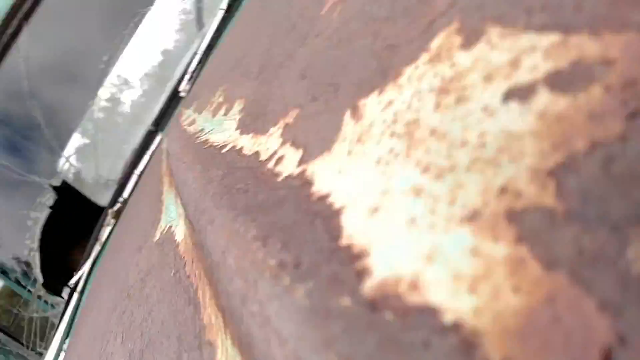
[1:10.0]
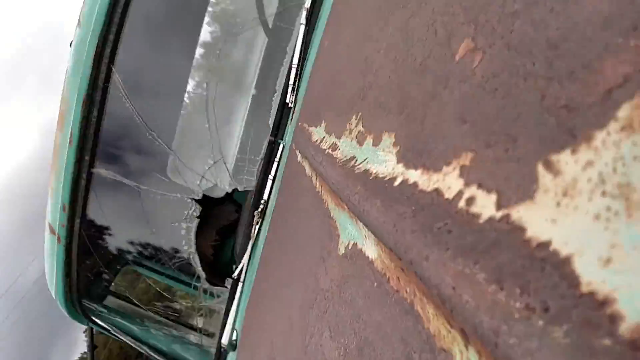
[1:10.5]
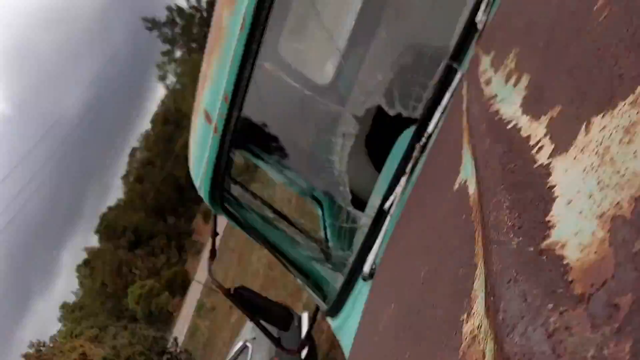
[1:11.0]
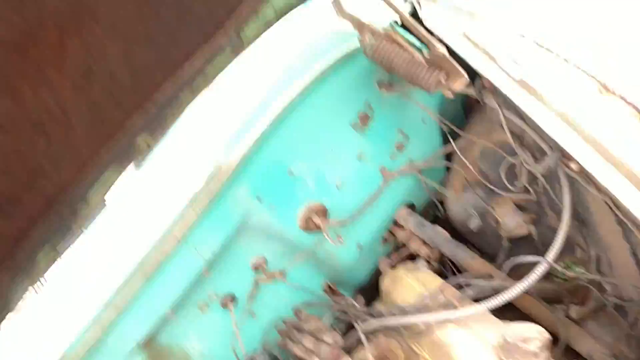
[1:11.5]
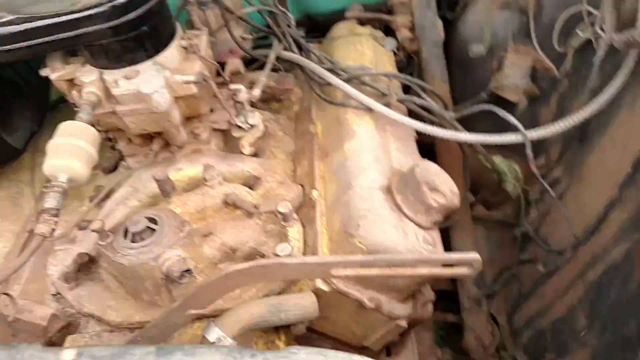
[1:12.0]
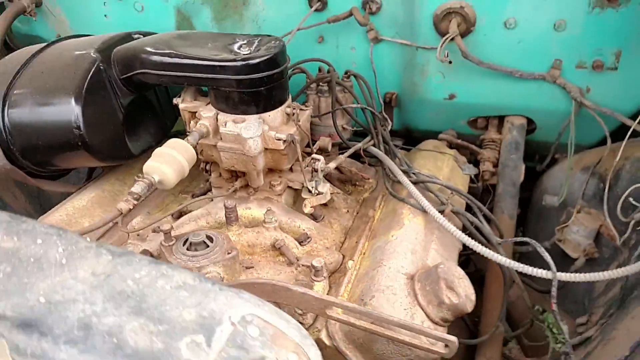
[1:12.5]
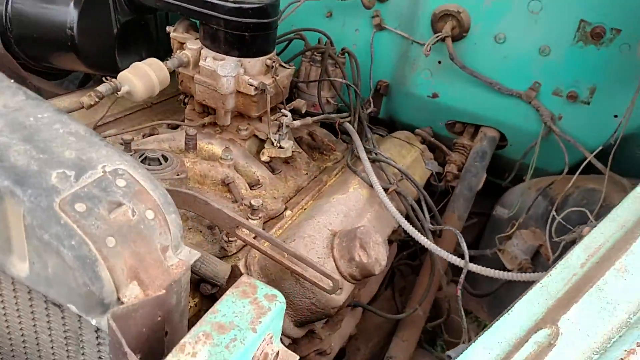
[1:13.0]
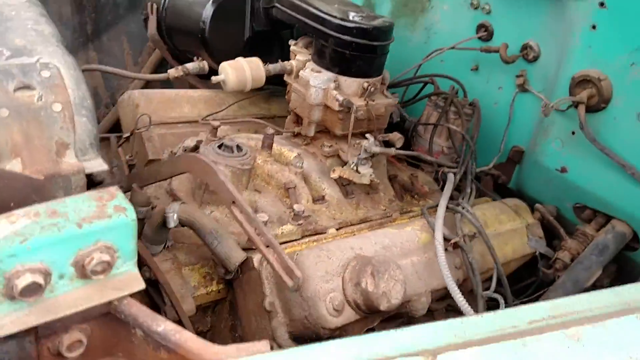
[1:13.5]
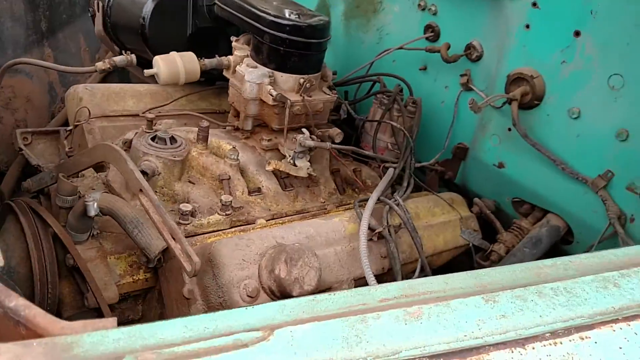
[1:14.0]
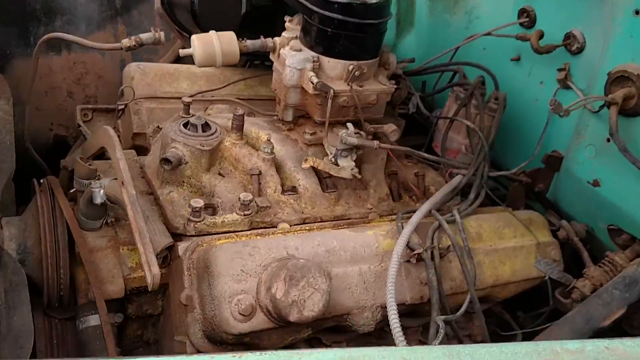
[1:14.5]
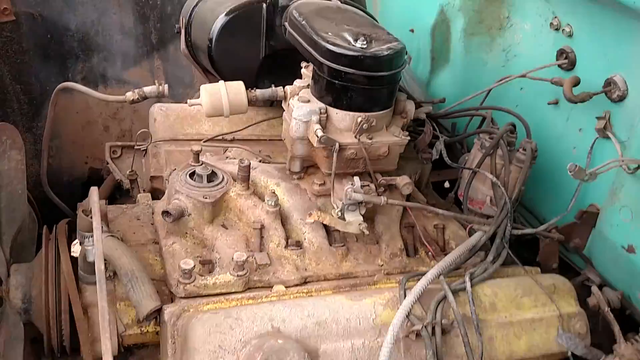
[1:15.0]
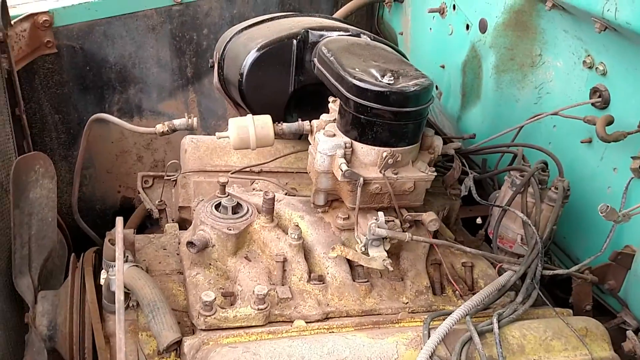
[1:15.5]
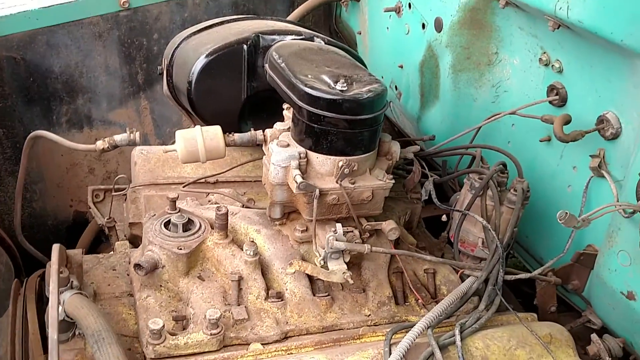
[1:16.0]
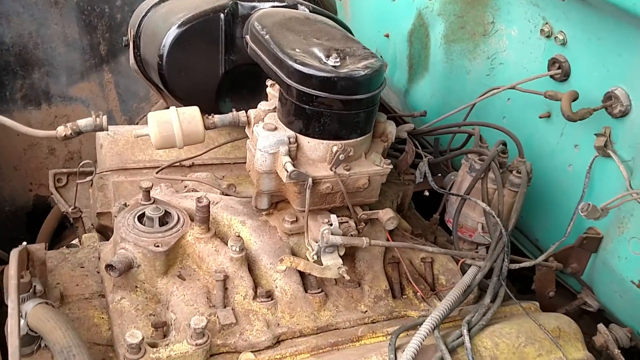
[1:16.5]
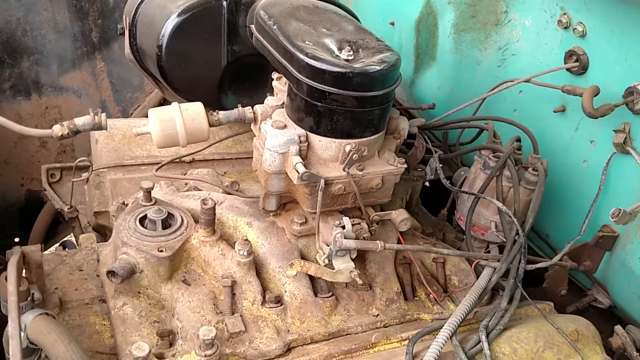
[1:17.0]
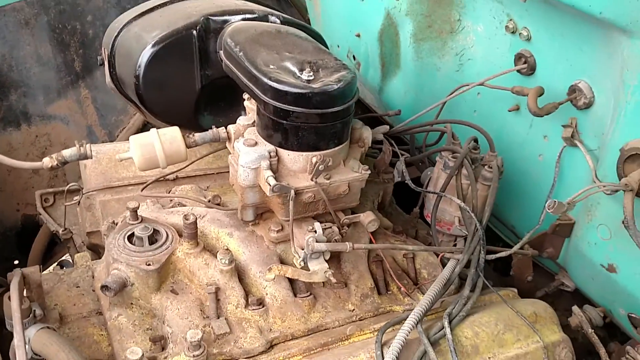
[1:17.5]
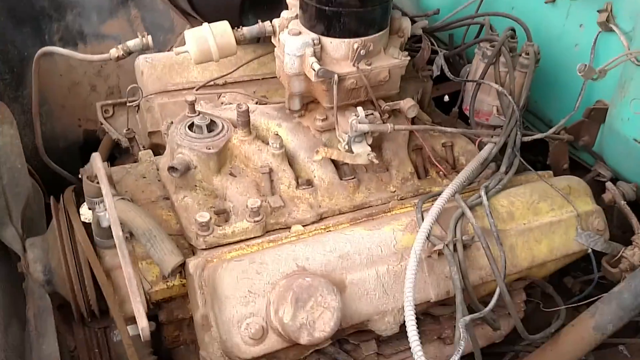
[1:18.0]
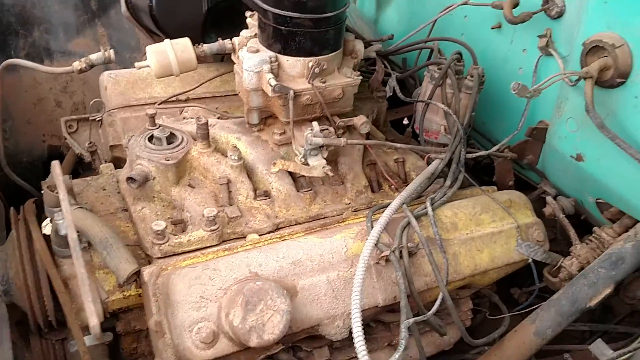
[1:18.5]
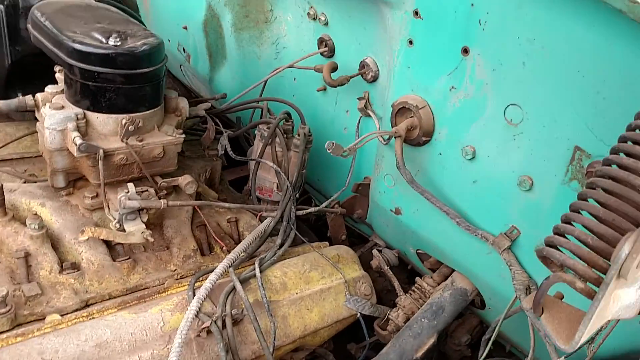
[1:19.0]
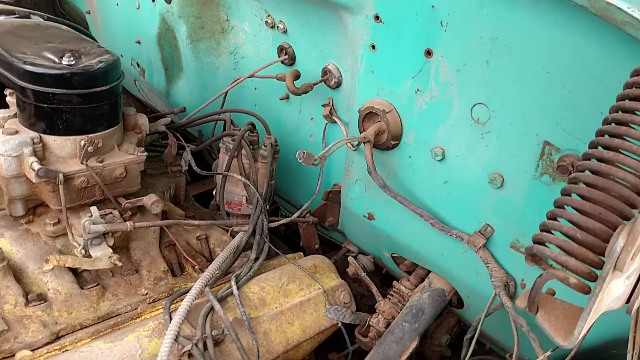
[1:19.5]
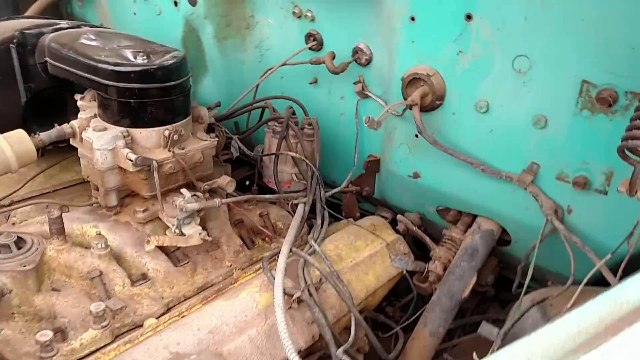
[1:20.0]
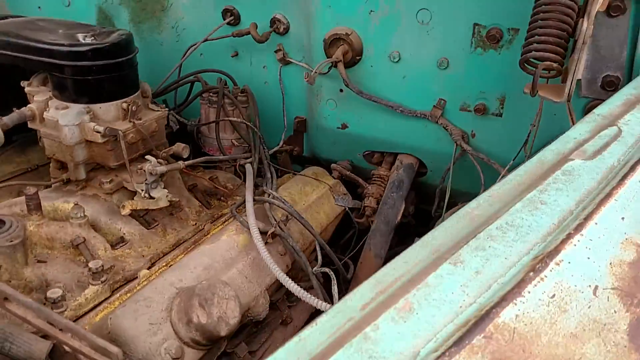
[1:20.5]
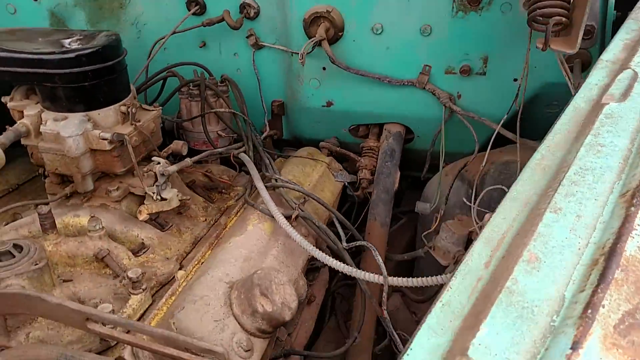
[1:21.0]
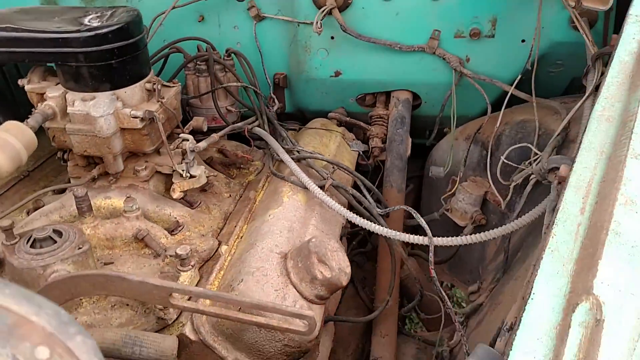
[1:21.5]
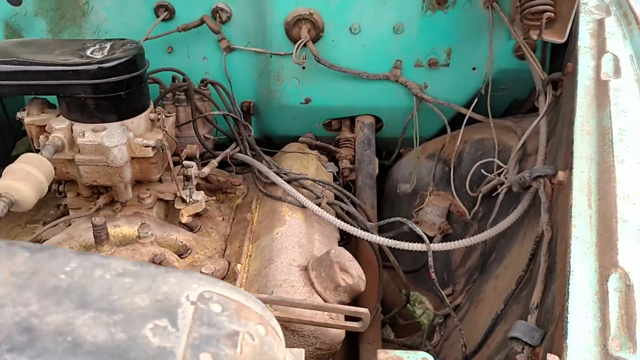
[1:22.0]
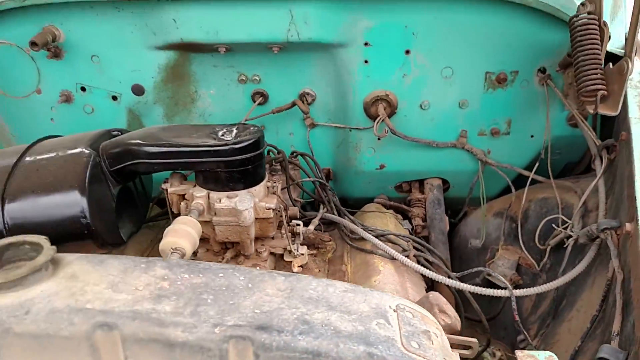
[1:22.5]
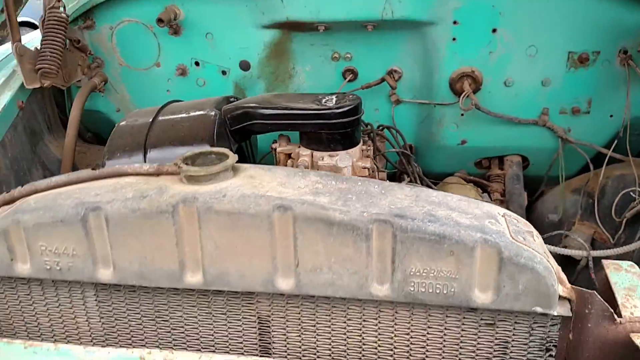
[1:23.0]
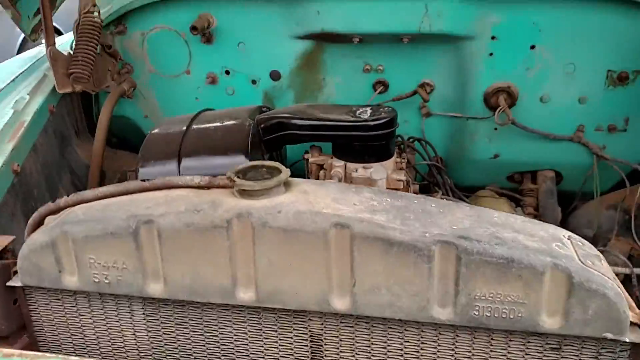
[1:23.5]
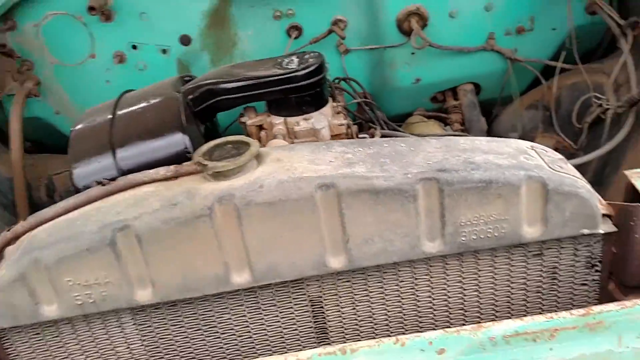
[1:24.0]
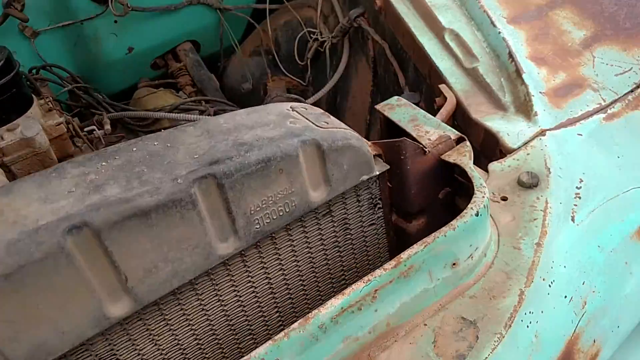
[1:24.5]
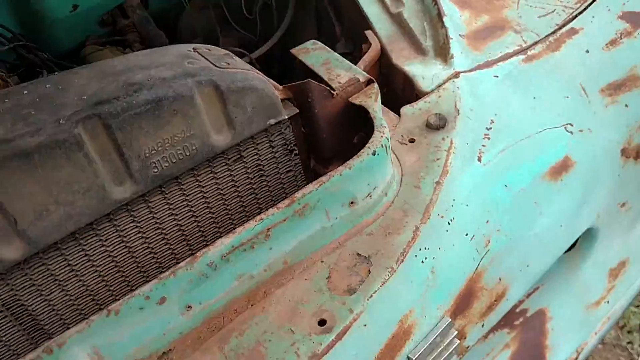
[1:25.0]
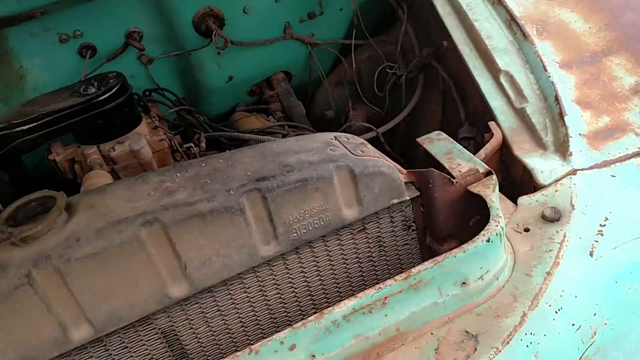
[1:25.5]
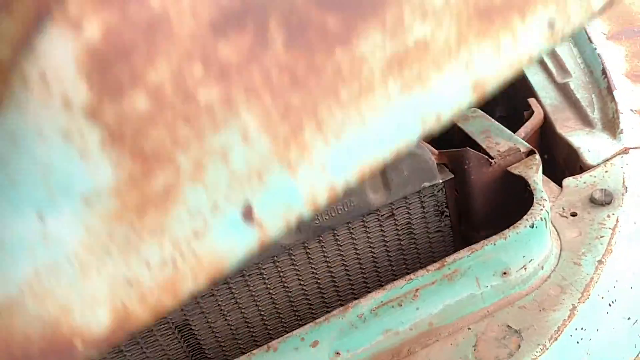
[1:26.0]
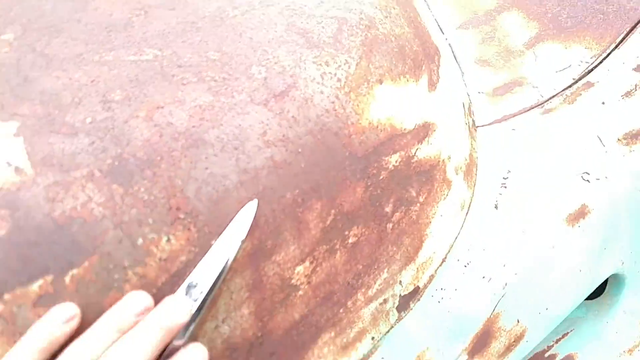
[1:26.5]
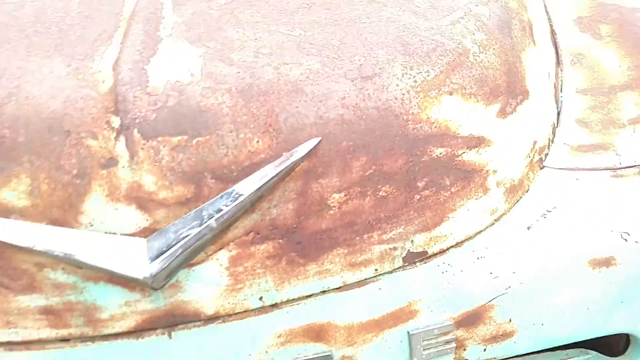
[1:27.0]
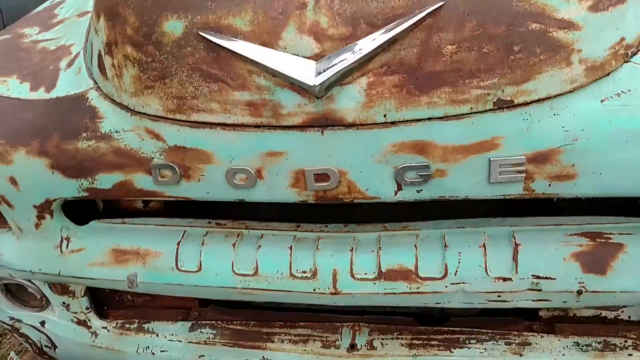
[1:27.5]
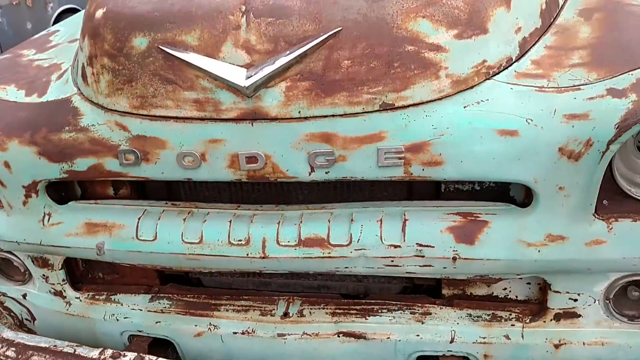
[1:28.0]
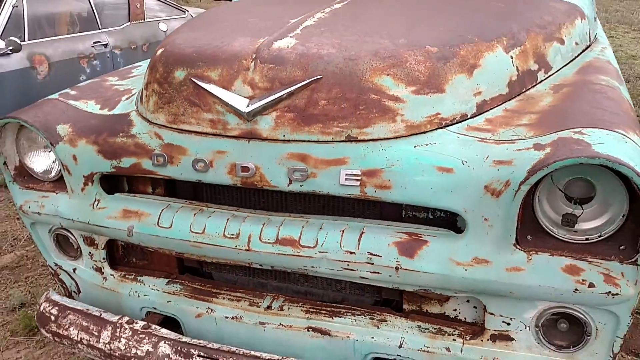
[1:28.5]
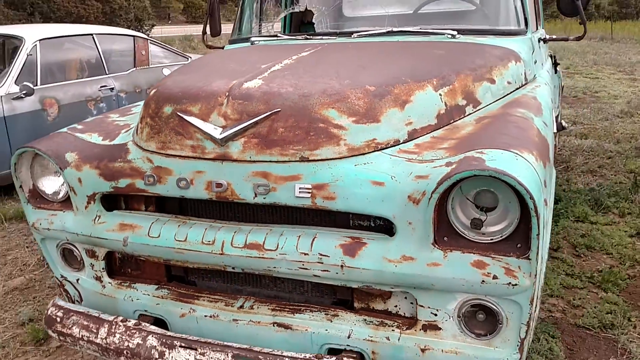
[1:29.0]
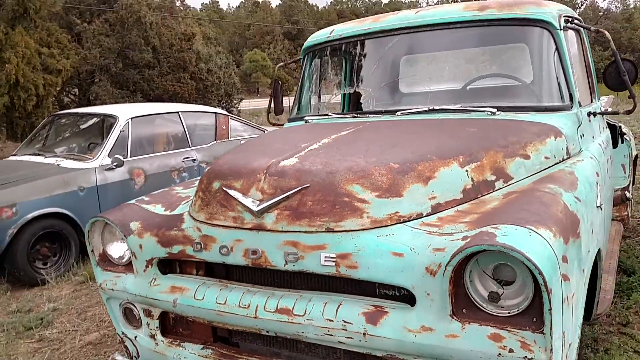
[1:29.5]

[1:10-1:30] The camera looks at the hood of a Dodge pickup truck, shakes a little, and then the hood pops up. The engine inside looks very old and decrepit, as if it could not work at all. Lots of wires and tubes are attached to different parts of the engine and also to the frame in the back. The camera zooms in and looks at it for a while, moving back and forth. A spring is visible on the side, inside the hood. The camera zooms out, showing an air filter on the front. A lot of the tubes are not attached to anything; tubes and wires are scattered around inside. A hand then closes the hood. The Dodge logo is on the front of the hood, along with letters that say "Dodge" on the front of the pickup. The truck is very old, torn up and decrepit; it is supposed to be white, but the paint is very faded and chipped away, there is lots of rust all over it, and there are holes in the windshield.